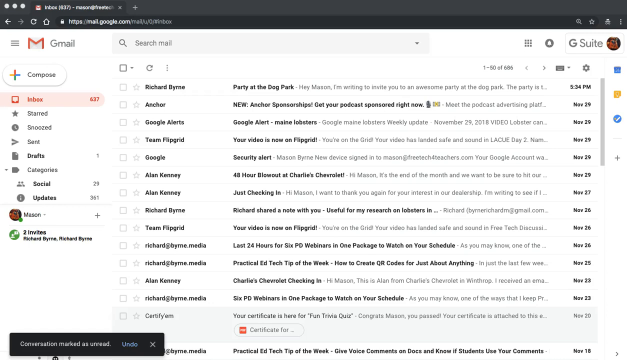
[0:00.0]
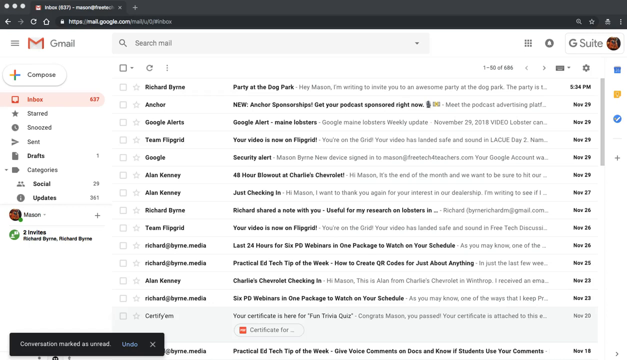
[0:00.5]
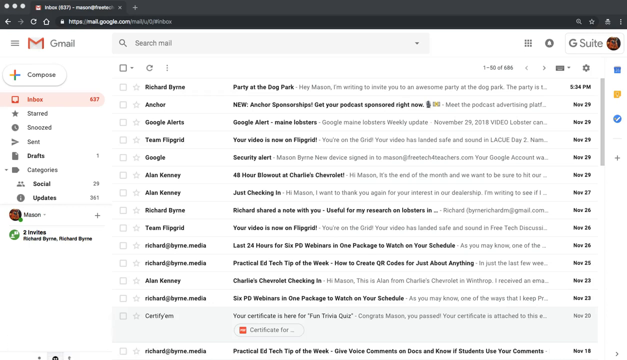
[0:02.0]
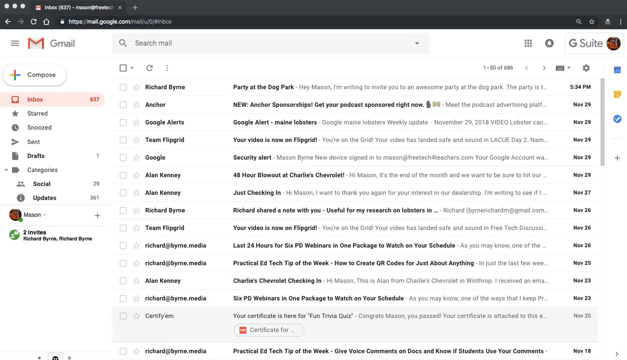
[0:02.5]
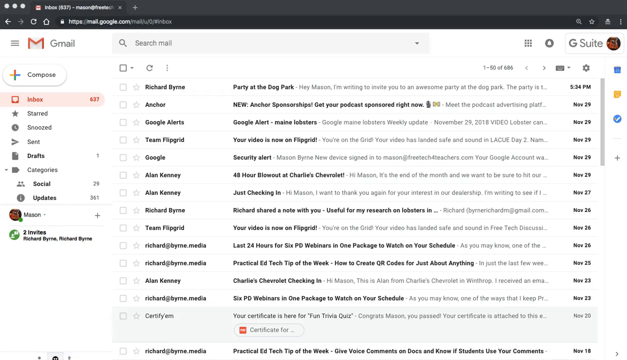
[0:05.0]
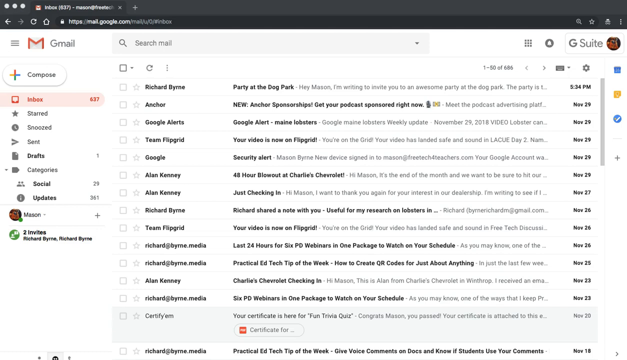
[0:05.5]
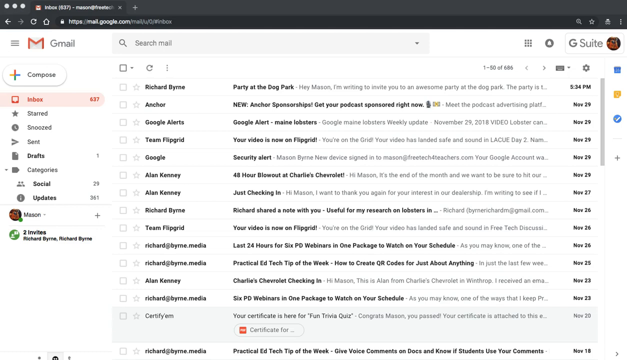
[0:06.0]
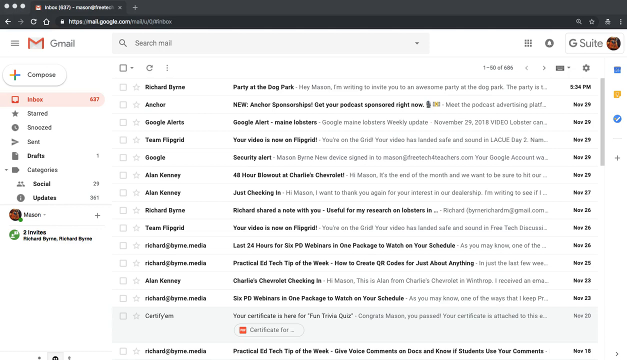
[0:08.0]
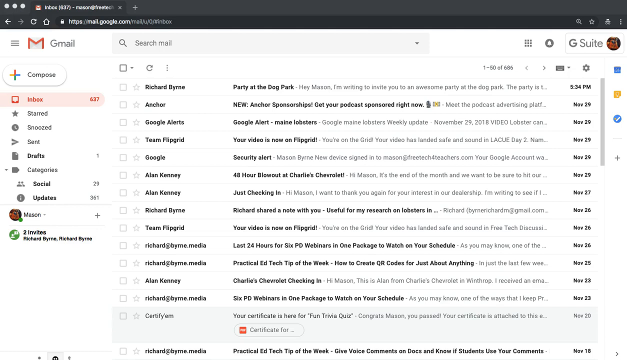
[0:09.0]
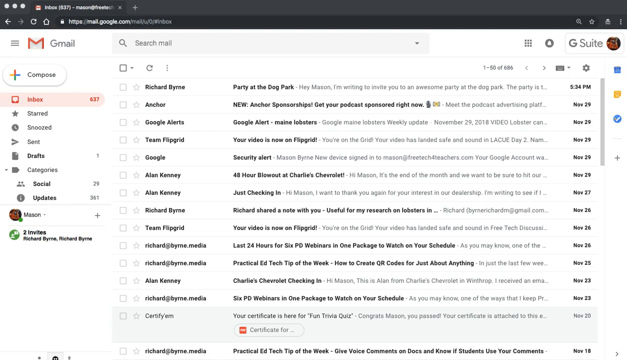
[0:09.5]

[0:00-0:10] Someone's email is open in Gmail, shown as a screen capture of their entire computer screen. The page has a white background with black text, as it is not in night mode. On the left-hand side of the screen are the inbox and different folders for finding emails. The other half of the screen lists the emails, showing the sender, the subject line, and the day each was sent.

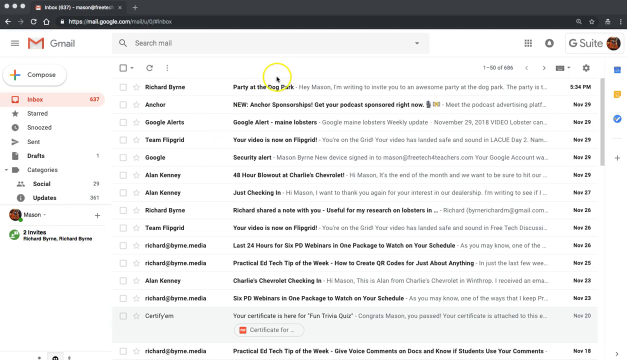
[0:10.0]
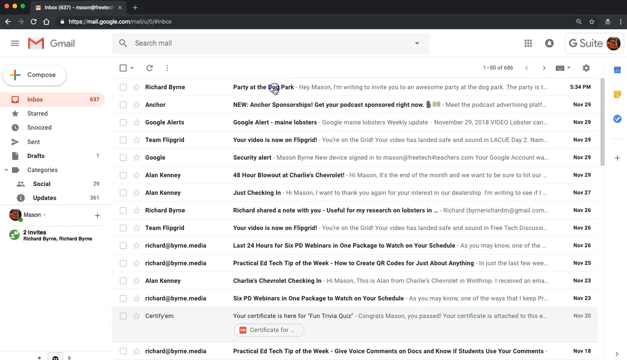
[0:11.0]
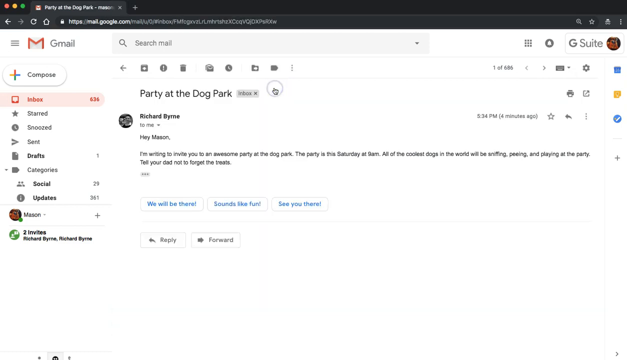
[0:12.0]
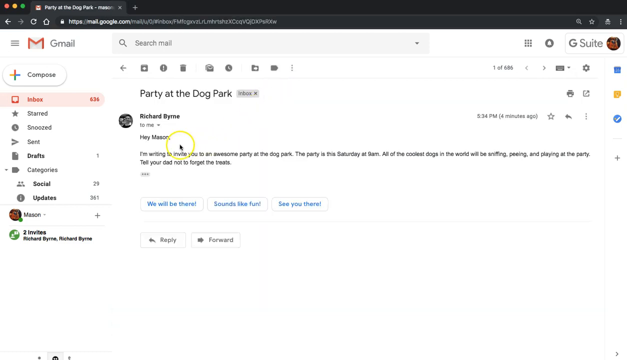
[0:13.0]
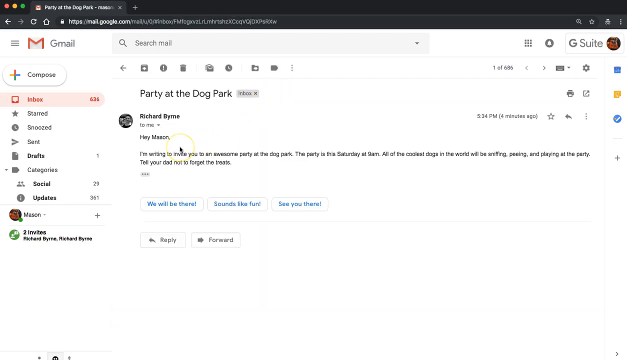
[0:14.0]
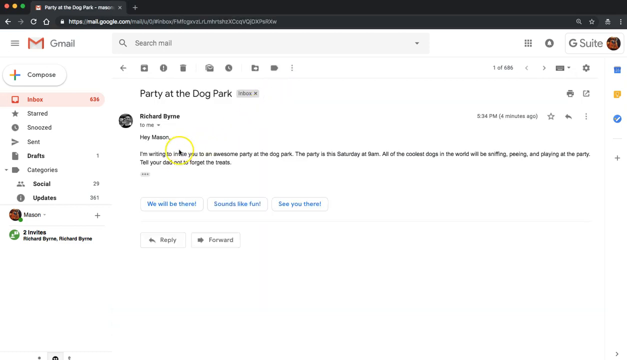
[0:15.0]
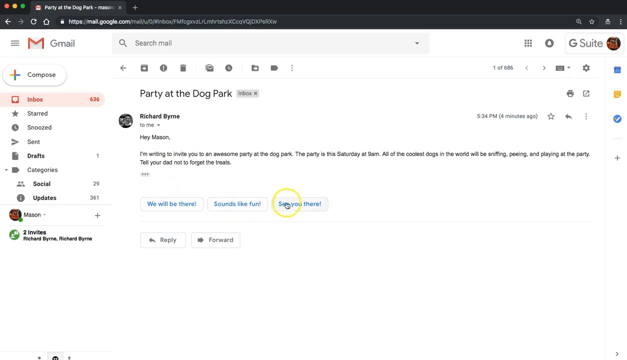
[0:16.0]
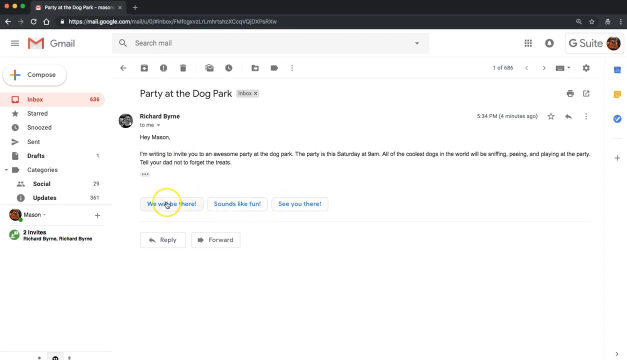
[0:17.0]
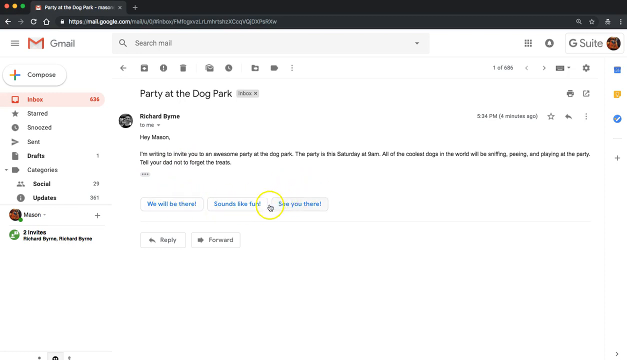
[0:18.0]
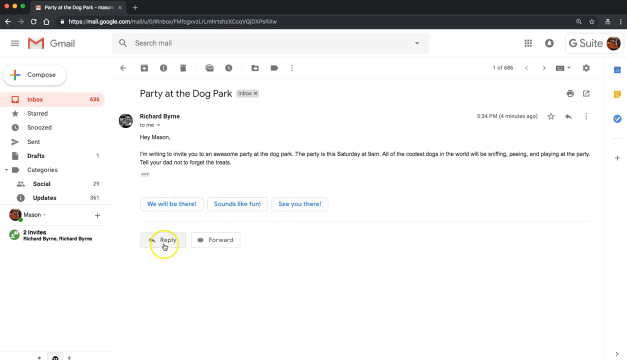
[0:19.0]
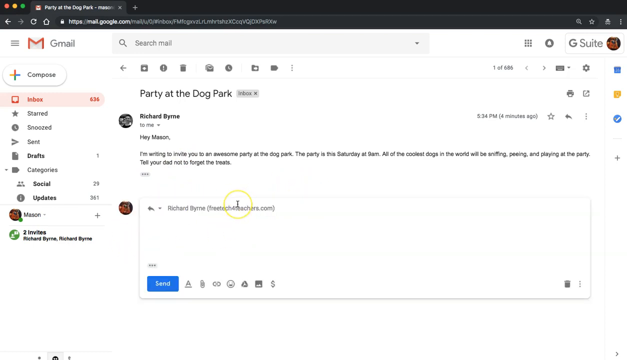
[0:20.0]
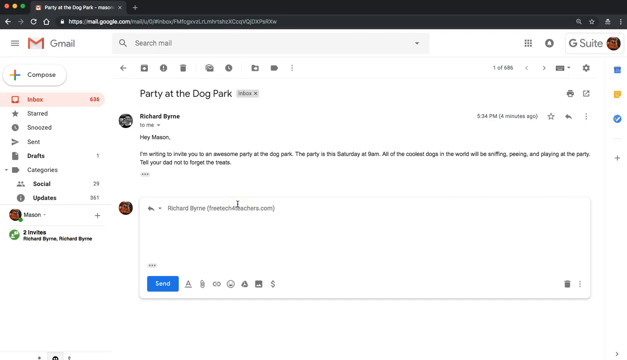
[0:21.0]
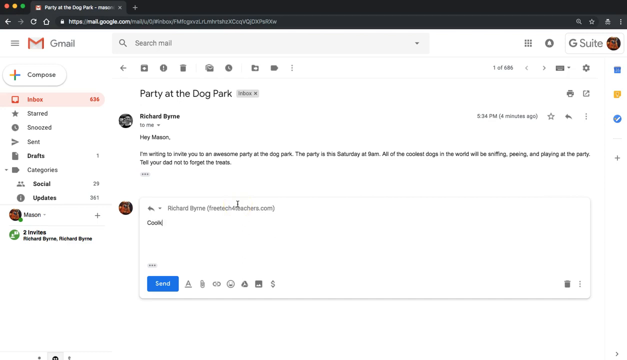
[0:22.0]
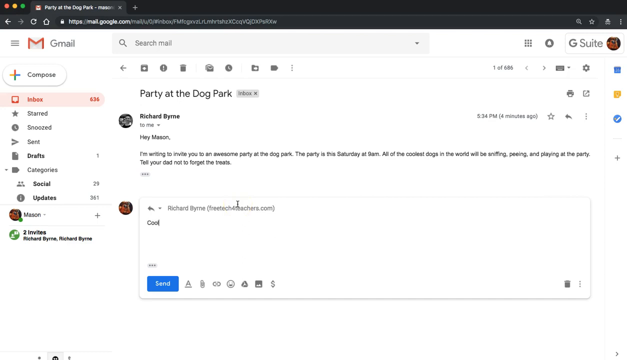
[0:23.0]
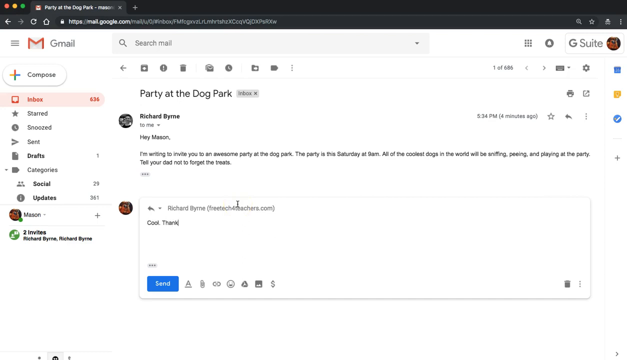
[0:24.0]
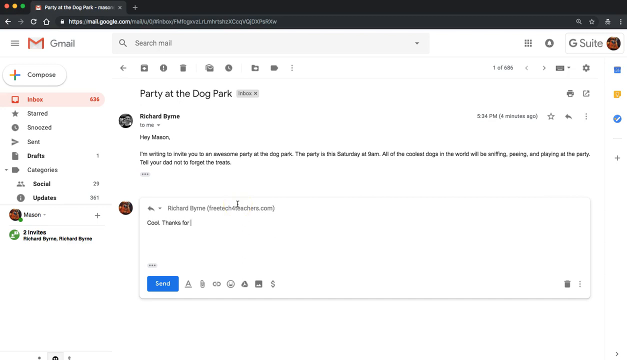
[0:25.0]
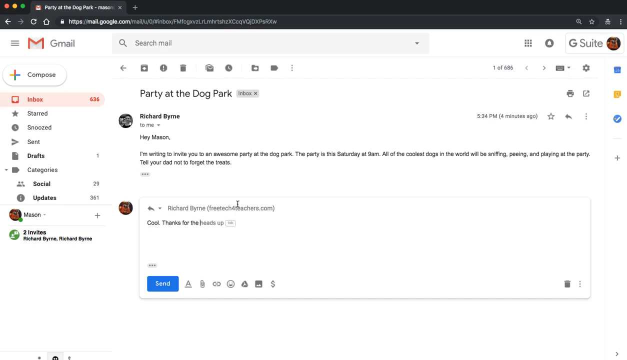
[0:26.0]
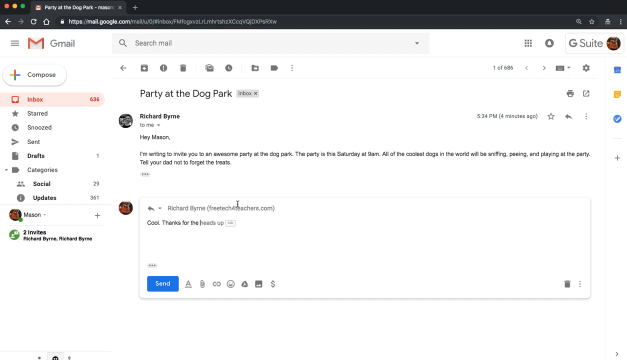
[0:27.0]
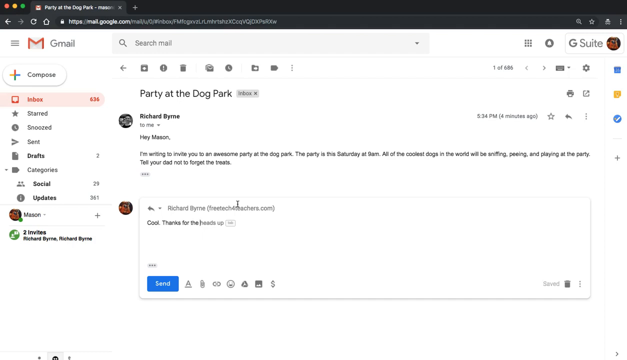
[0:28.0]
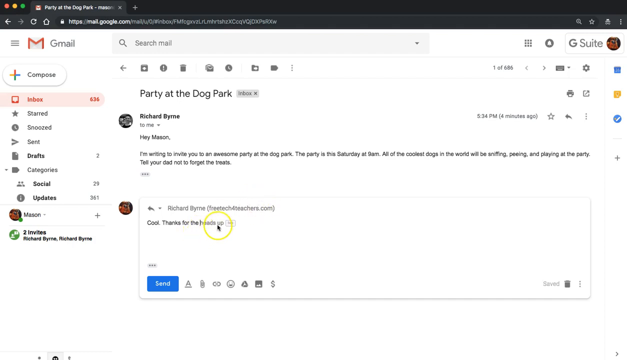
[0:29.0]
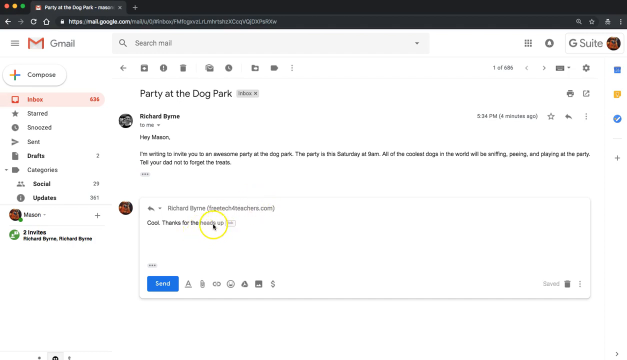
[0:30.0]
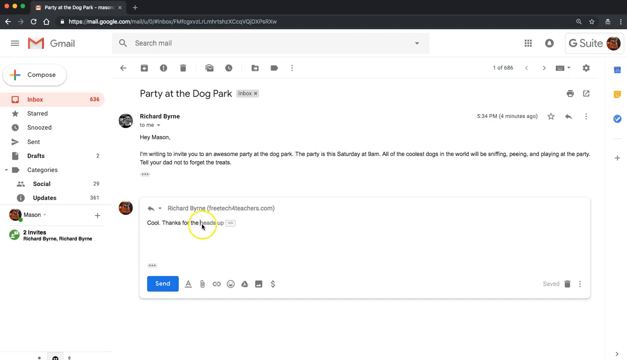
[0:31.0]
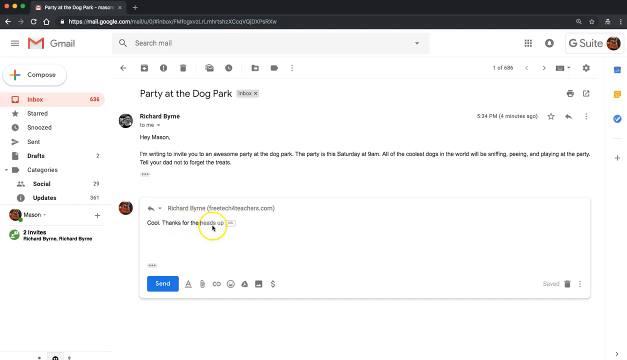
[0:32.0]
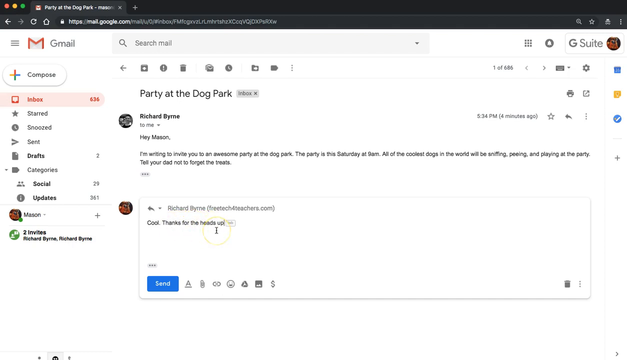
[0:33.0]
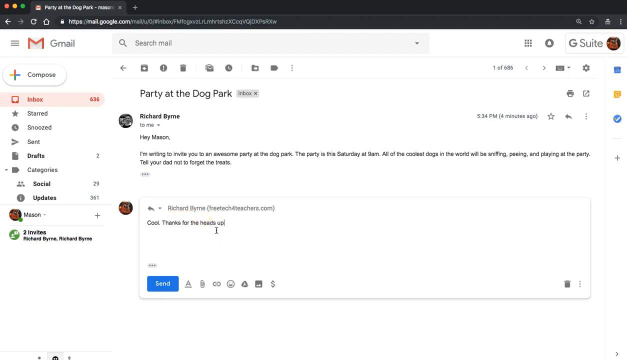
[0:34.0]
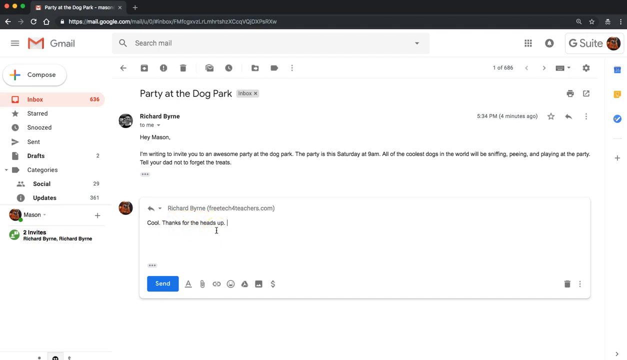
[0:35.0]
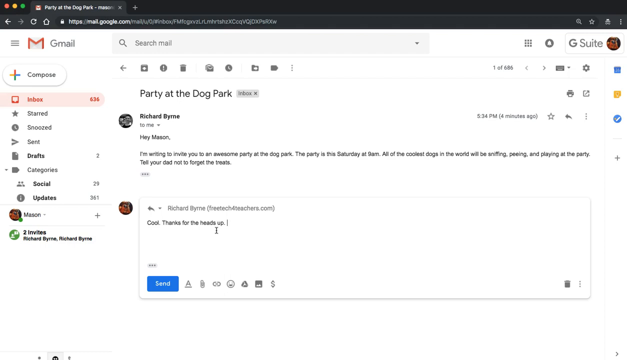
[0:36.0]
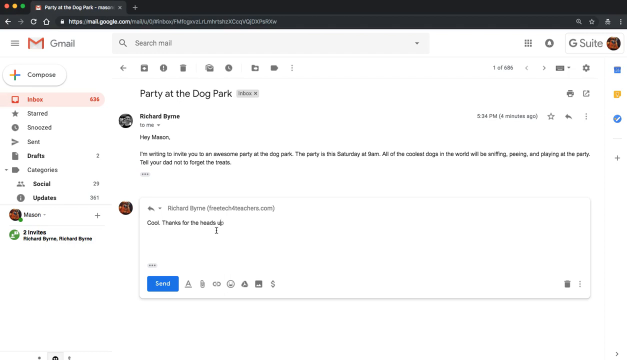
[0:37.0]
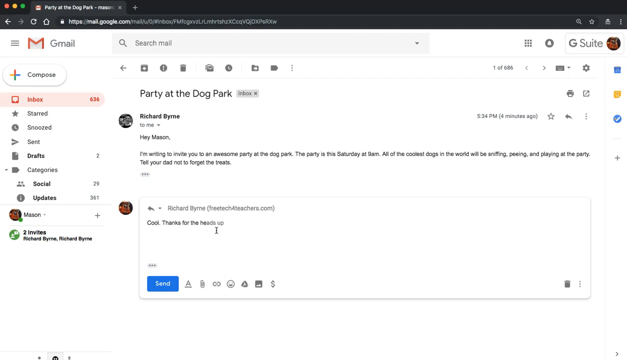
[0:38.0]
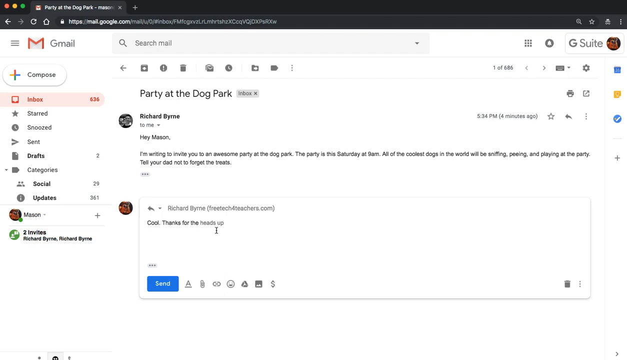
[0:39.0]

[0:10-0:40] The screen capture shows someone's Gmail with the inbox selected. They select the first email in the list, clicking it with a cursor that has a yellow ring around it. The email, titled "Party at Dog Park" from Richard Byrne, opens and reads: "Hey Mason, I'm writing to invite you to an awesome party at the dog park. The party is this Saturday at 9am. All of the coolest dogs in the world will be sniffing, peering, and playing in the park. Tell your dad not to forget the treats." The mouse hovers over the words as they are read, then over the responses. They click reply and type "Good, thanks for the", pause for a second, go over the written words "heads up", and then erase "heads up".